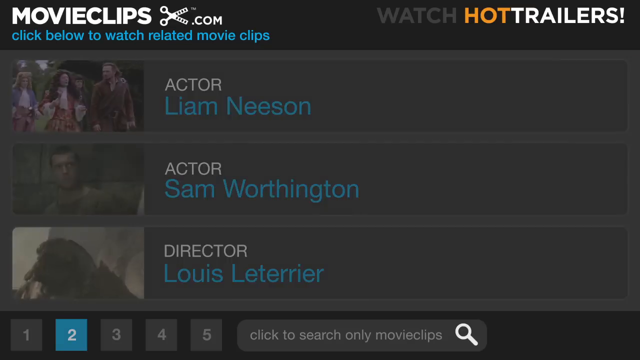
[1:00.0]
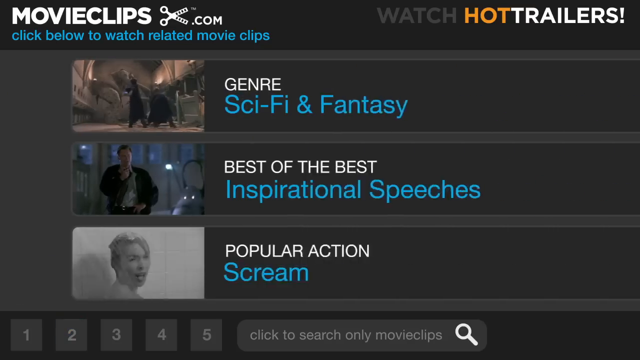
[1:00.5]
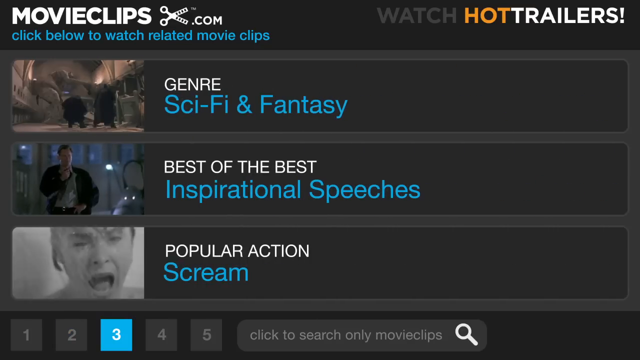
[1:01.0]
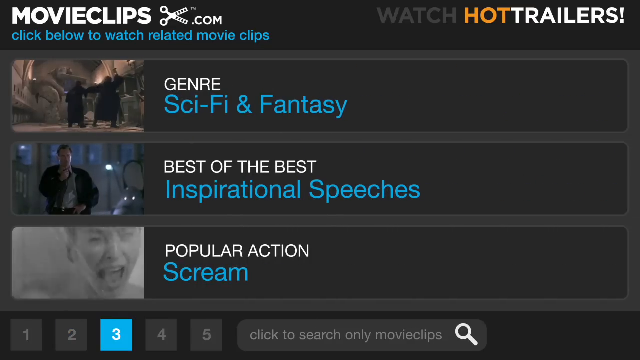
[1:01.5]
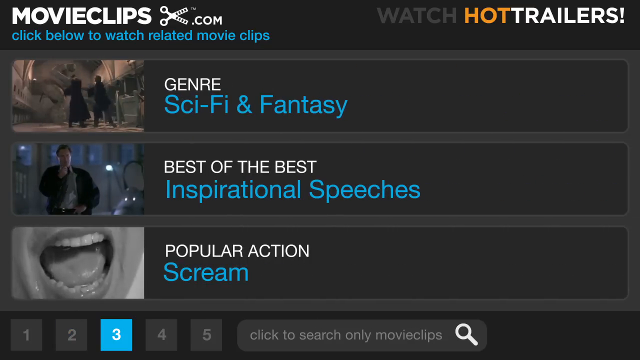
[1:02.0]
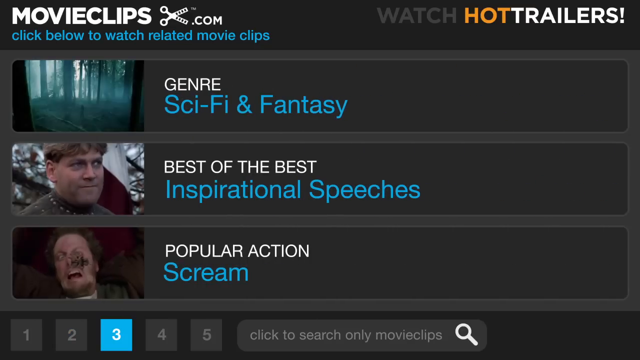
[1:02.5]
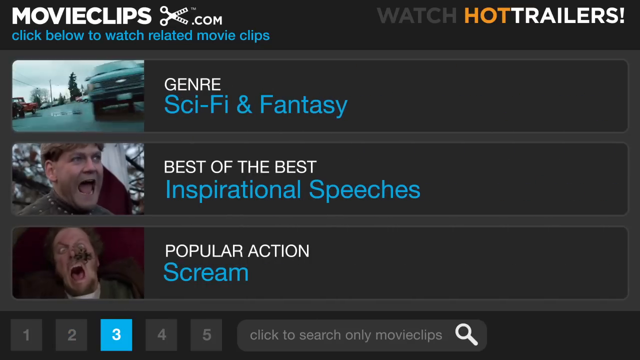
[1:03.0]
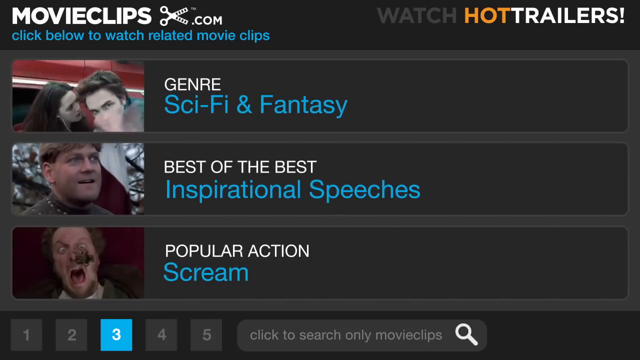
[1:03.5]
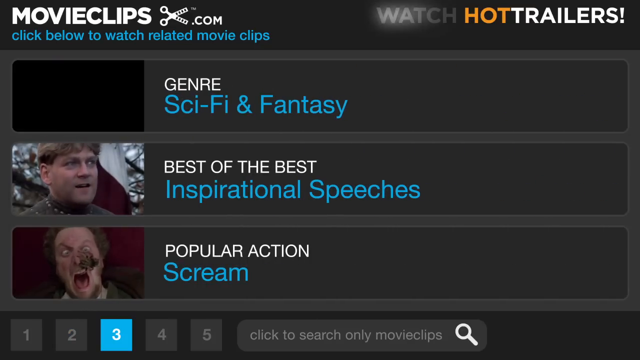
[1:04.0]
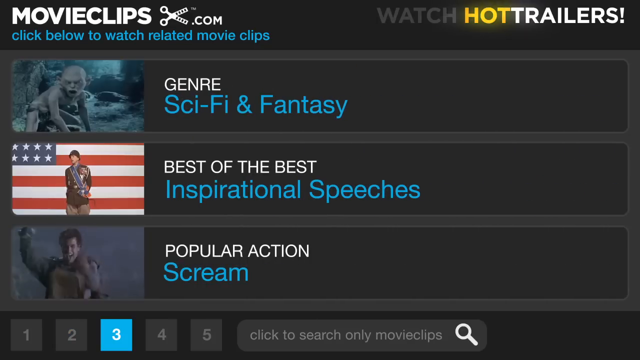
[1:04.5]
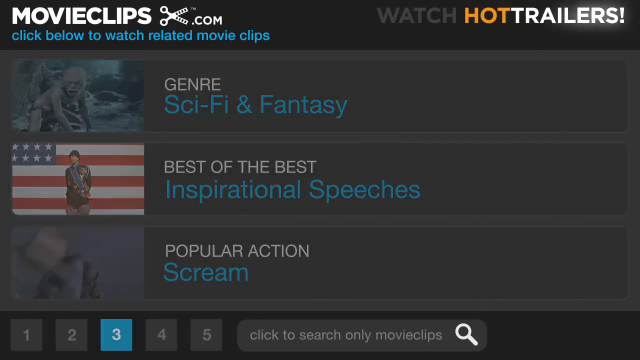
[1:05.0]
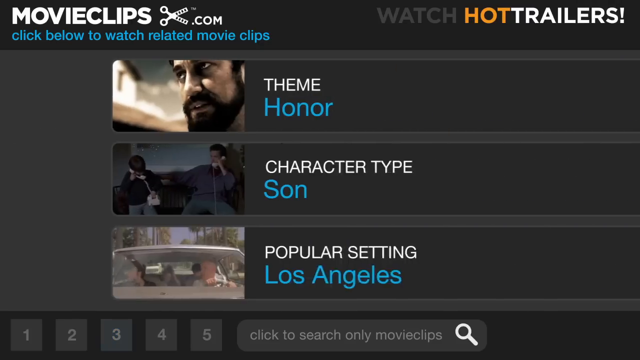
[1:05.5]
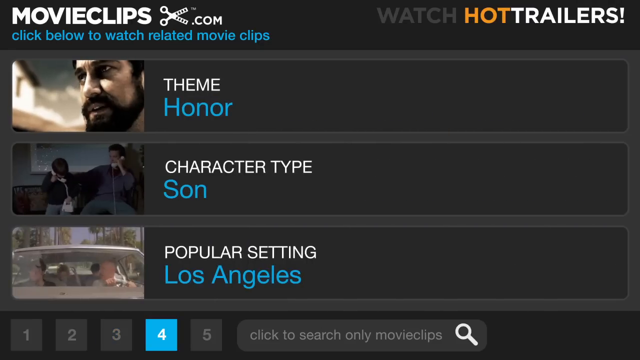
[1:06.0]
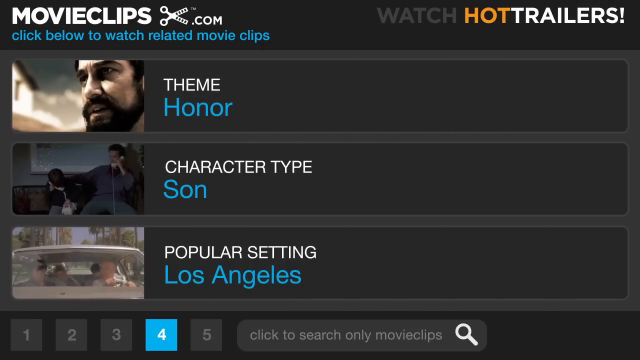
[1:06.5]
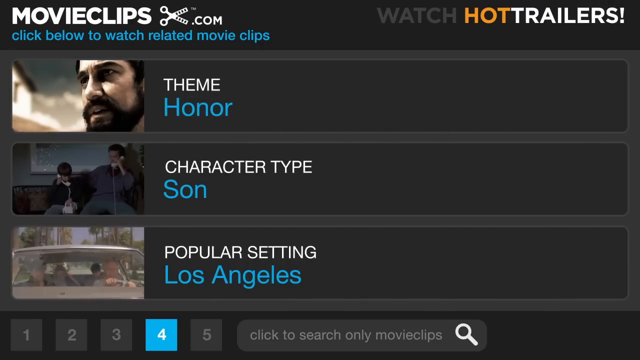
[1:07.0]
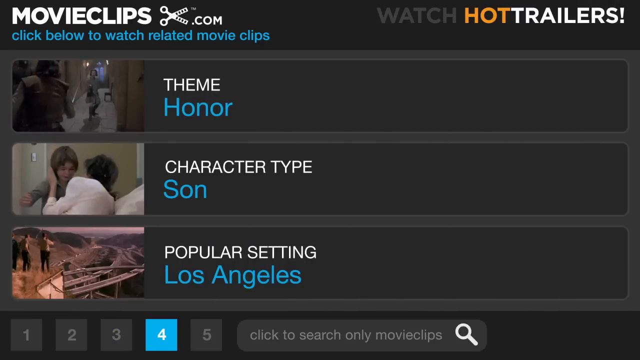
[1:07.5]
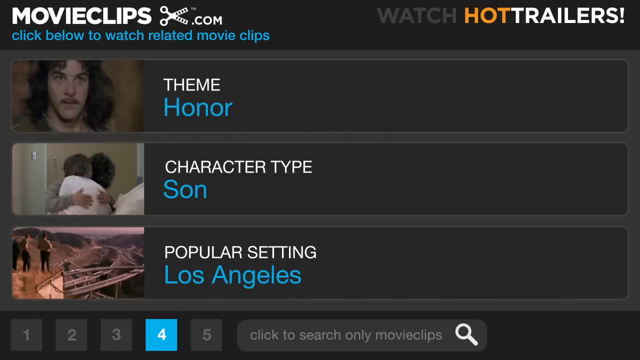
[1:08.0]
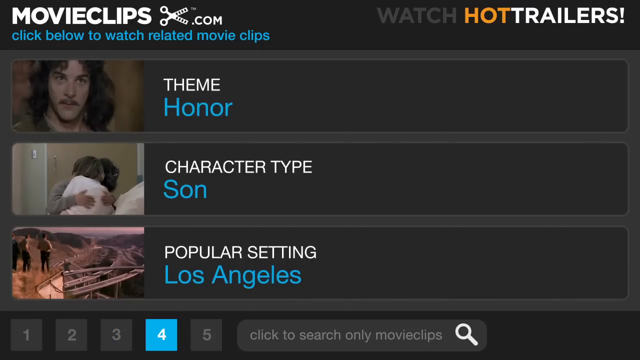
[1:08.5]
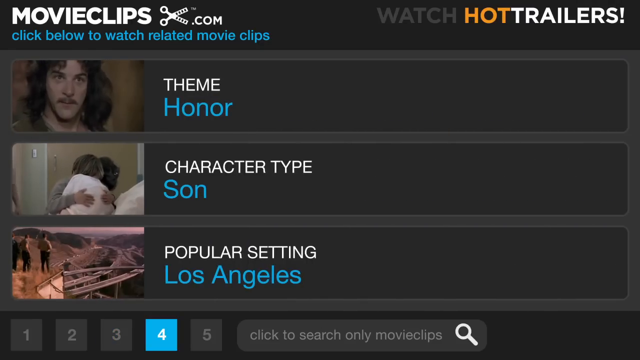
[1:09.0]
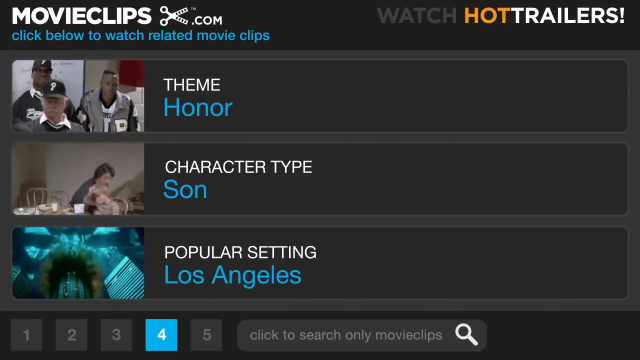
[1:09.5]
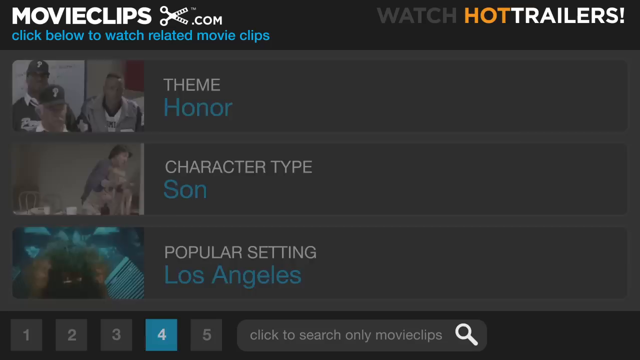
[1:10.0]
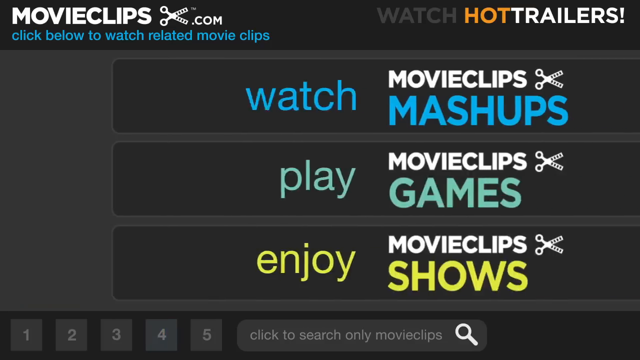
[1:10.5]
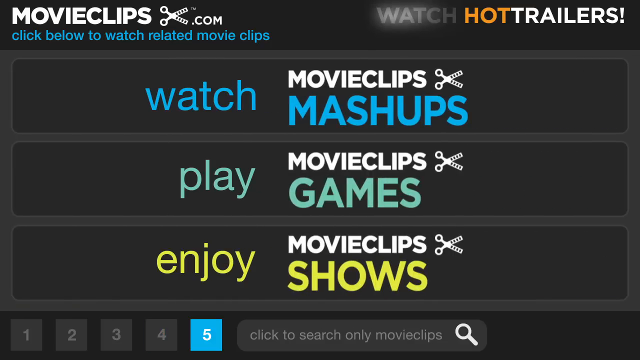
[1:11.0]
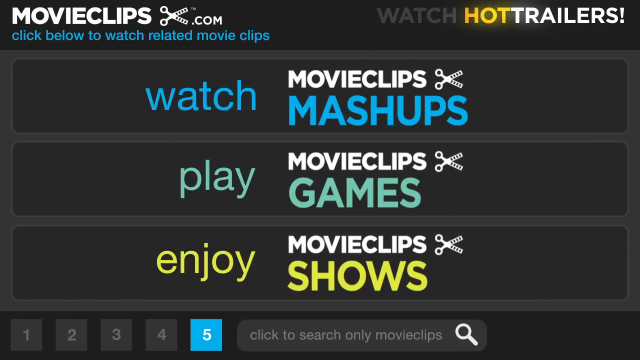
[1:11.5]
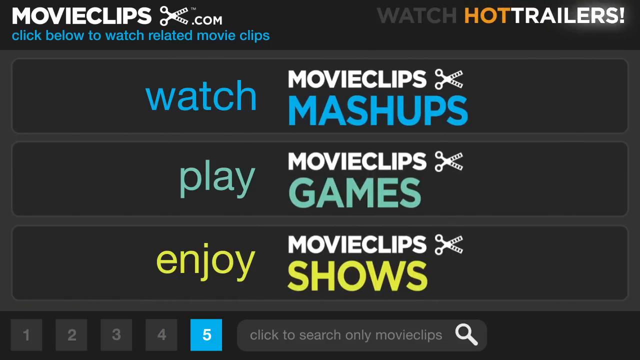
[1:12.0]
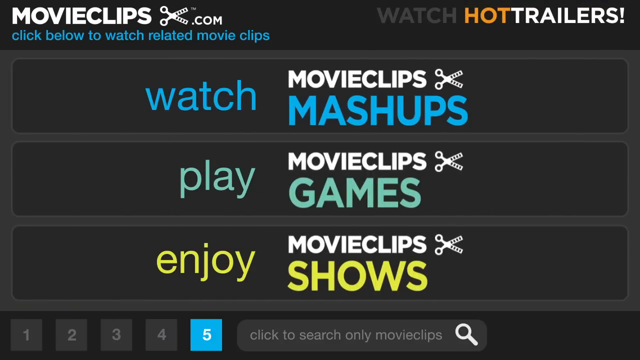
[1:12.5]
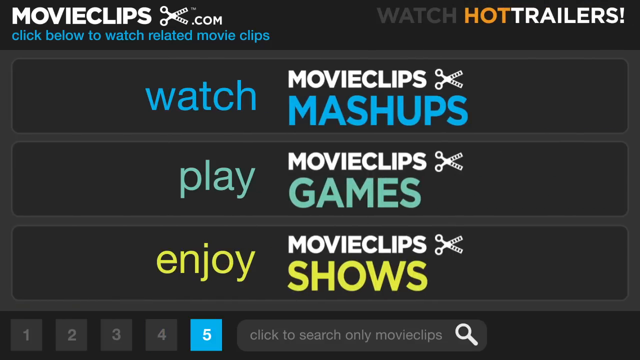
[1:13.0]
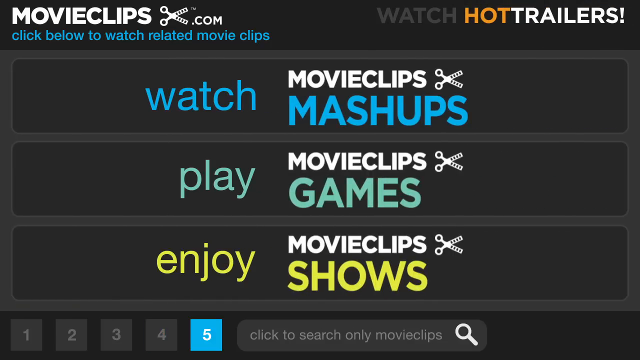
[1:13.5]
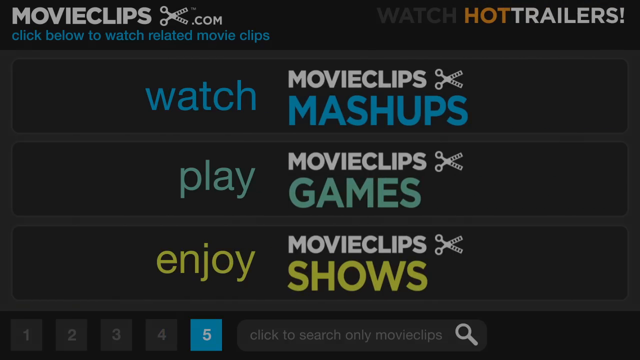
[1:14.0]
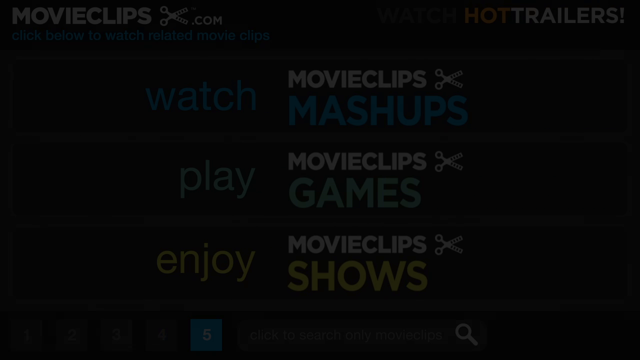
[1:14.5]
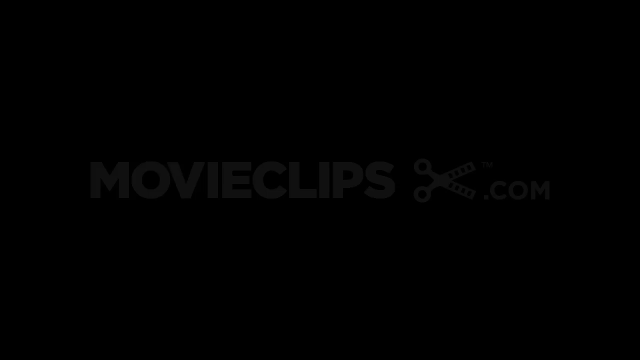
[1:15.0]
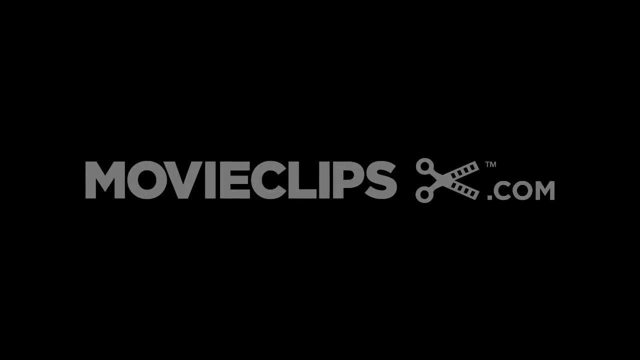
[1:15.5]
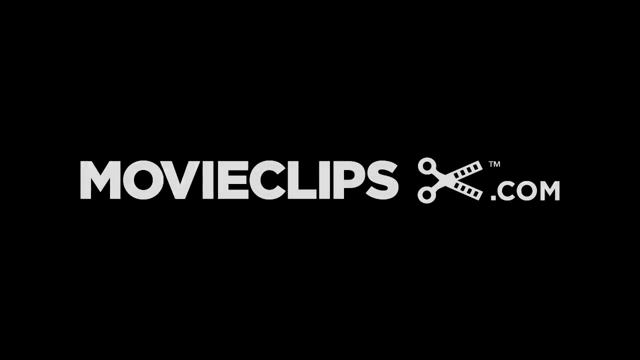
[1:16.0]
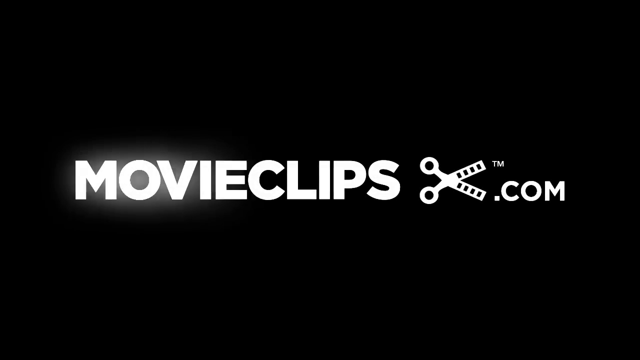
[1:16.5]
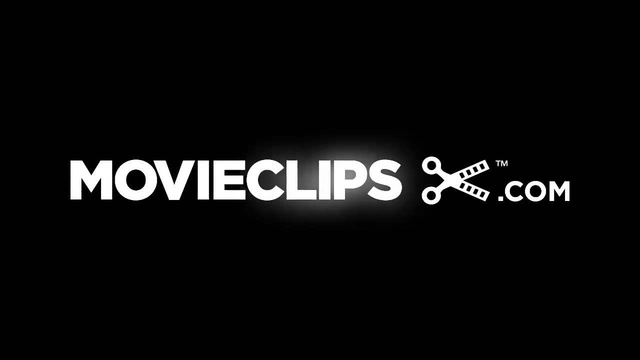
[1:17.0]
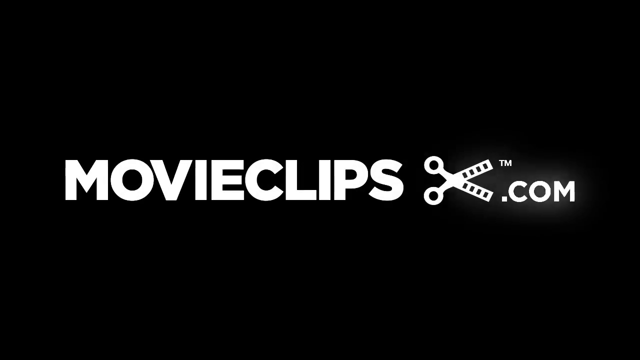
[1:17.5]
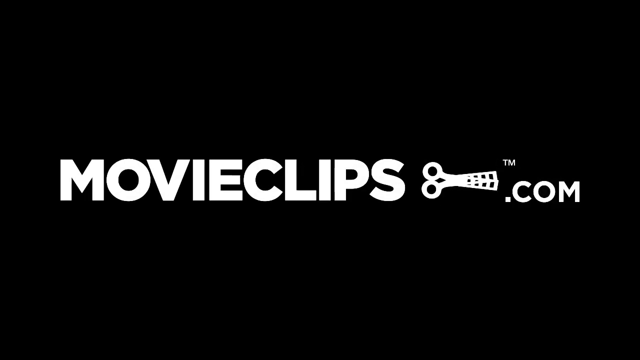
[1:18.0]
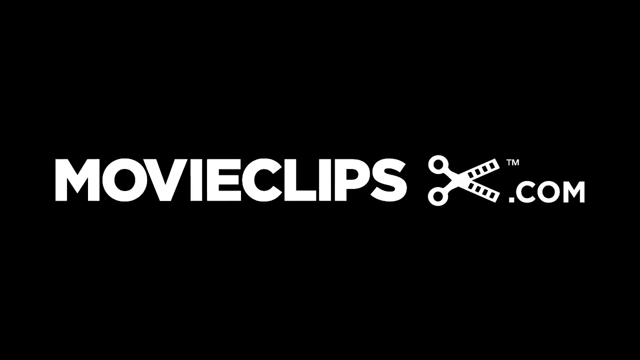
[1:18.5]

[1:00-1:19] The movieclips.com page for the movie lists its genre as sci-fi and fantasy, with labels including "best of the best," "inspirational speeches" and "popular action." The theme is shown as honor and the character type as son. The channel page offers movie clips mashups, movie clips games and movie clip shows, and "Hot Trailers" is written at the top. There is also an option to click and see related clips. At the end, the website name movieclips.com appears with options to watch games, videos and TV shows.